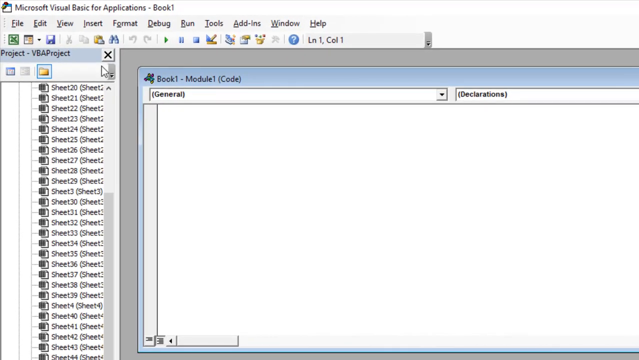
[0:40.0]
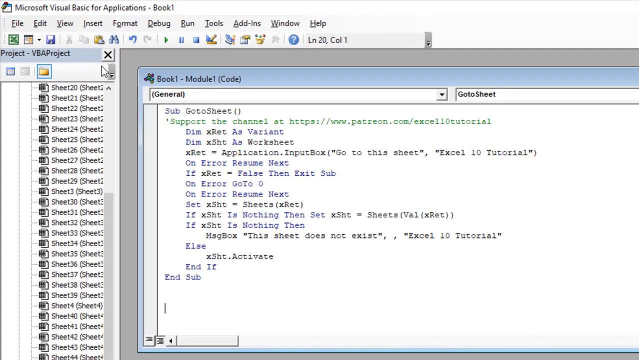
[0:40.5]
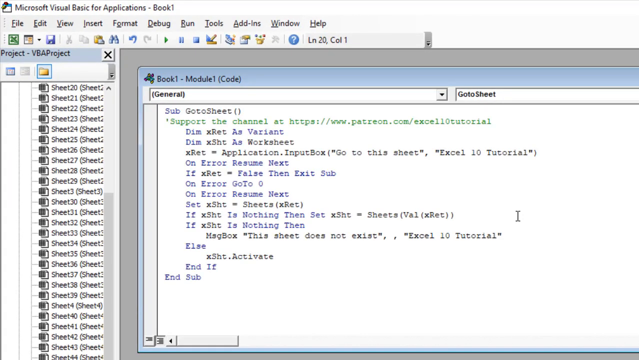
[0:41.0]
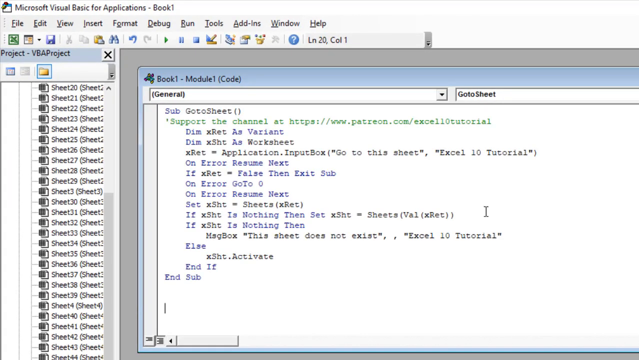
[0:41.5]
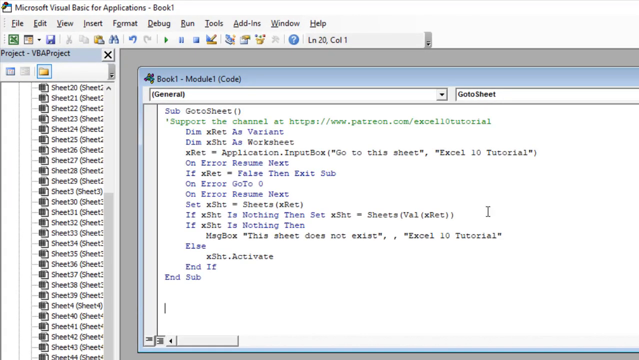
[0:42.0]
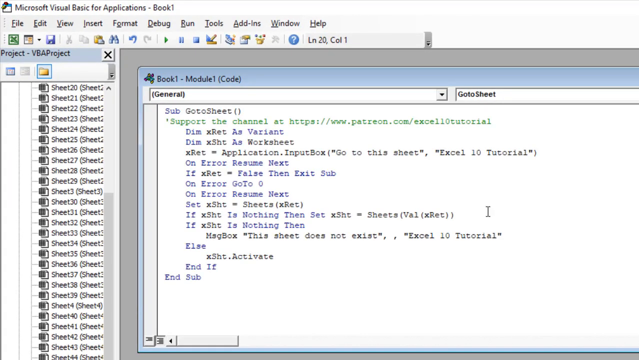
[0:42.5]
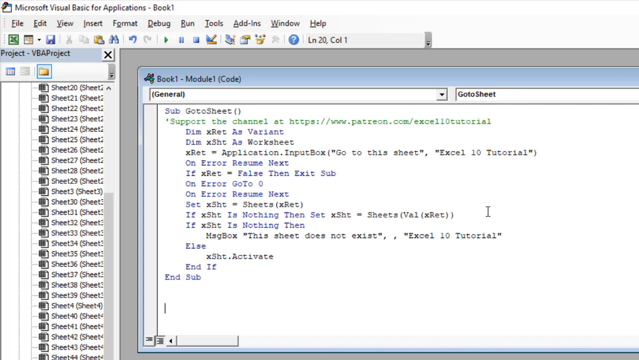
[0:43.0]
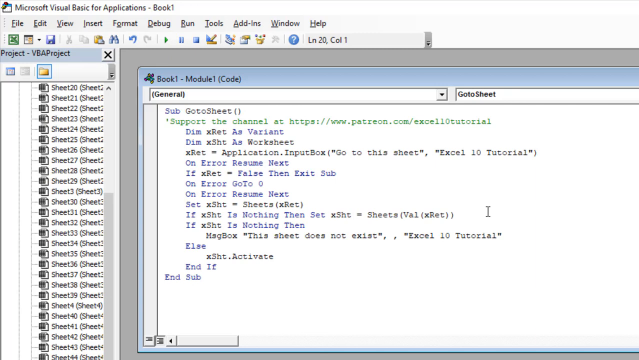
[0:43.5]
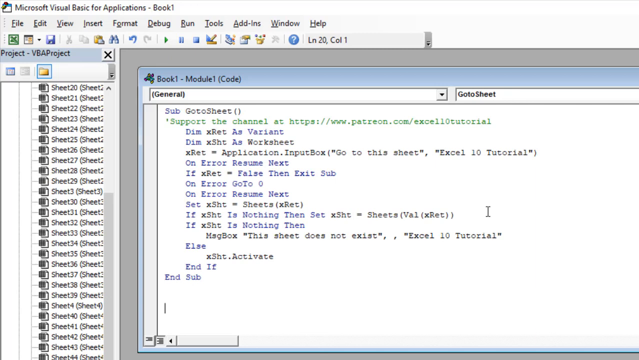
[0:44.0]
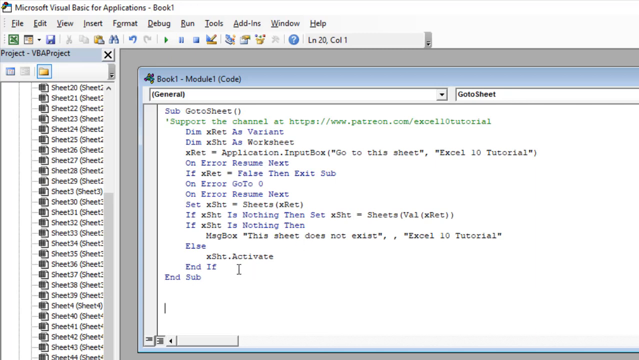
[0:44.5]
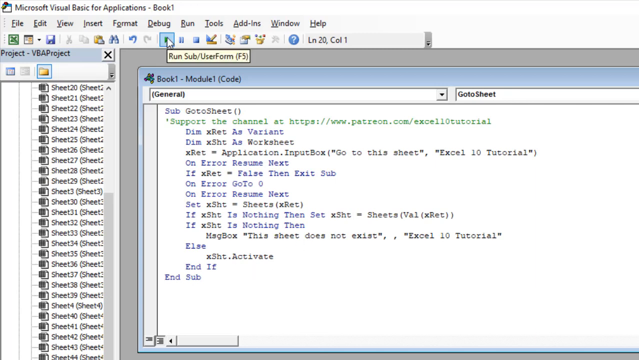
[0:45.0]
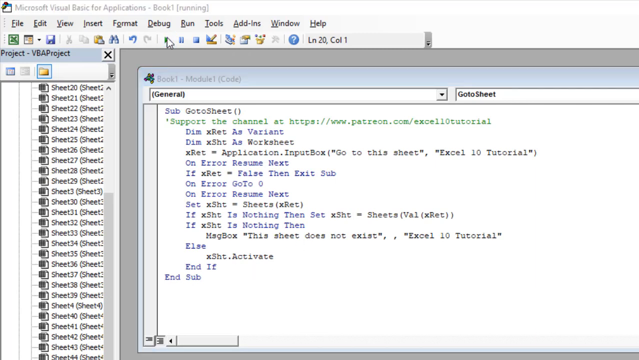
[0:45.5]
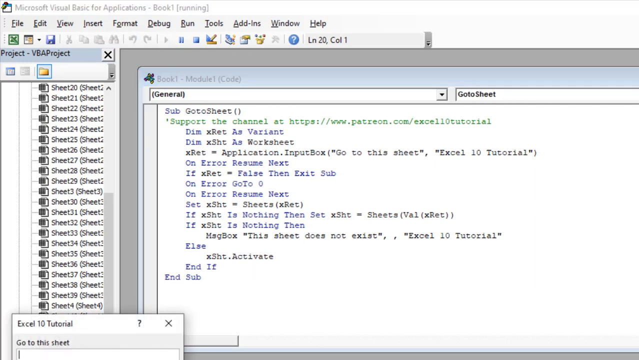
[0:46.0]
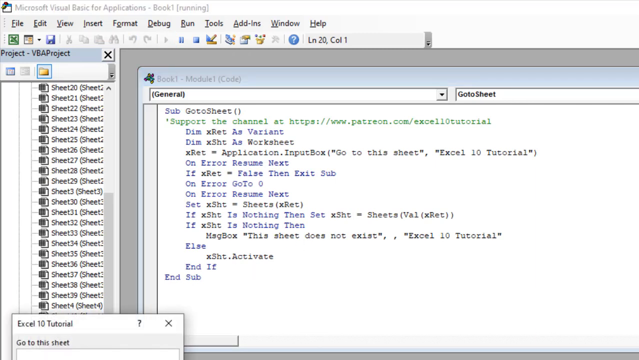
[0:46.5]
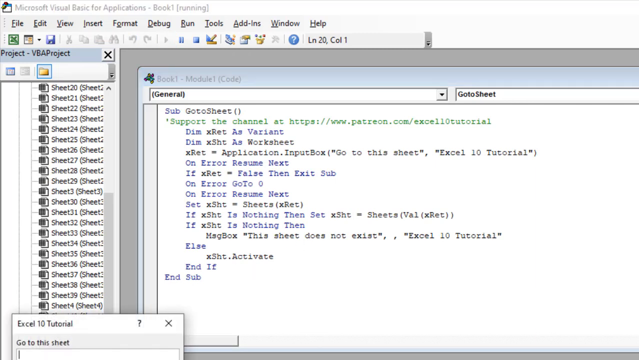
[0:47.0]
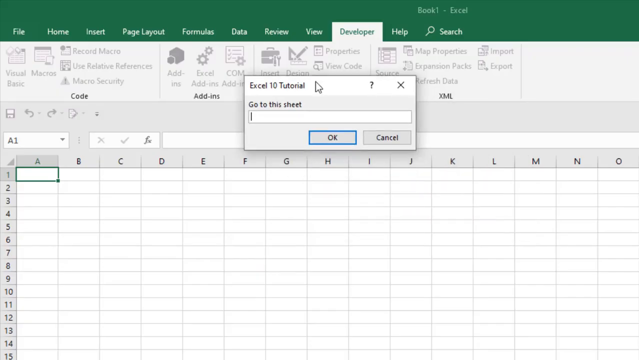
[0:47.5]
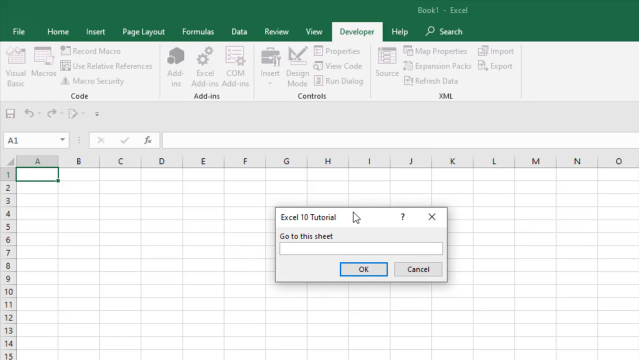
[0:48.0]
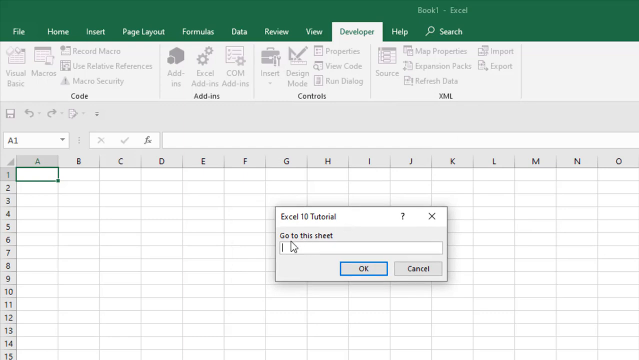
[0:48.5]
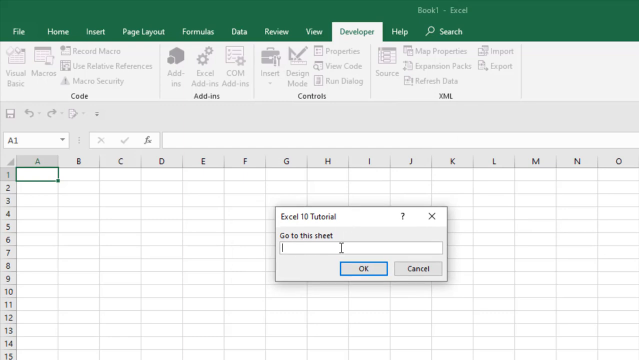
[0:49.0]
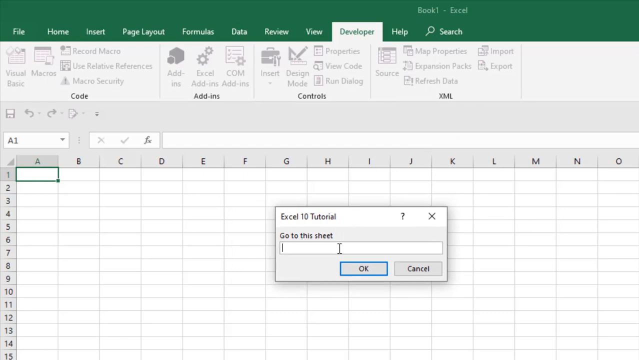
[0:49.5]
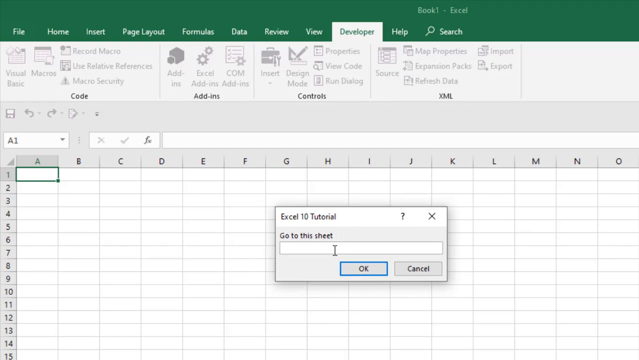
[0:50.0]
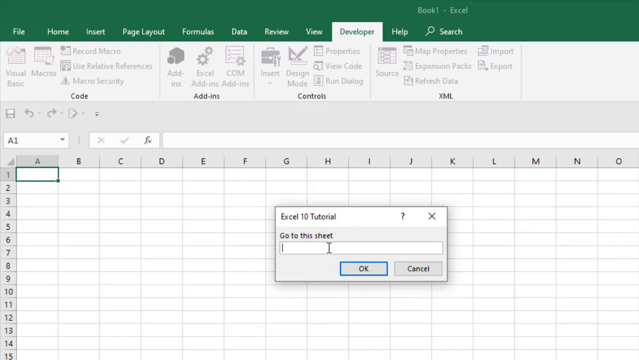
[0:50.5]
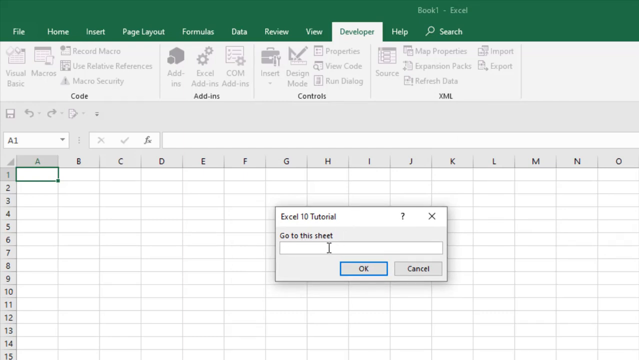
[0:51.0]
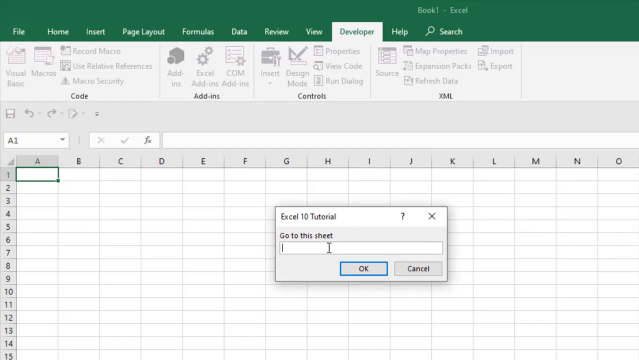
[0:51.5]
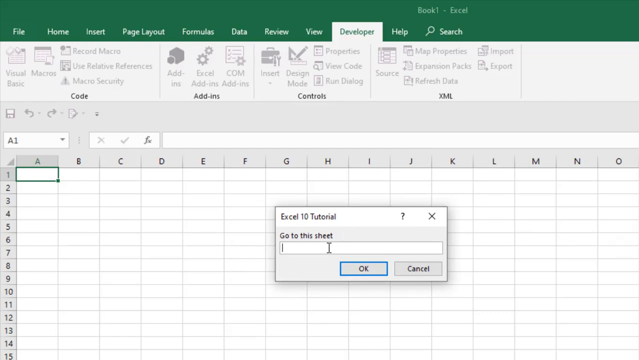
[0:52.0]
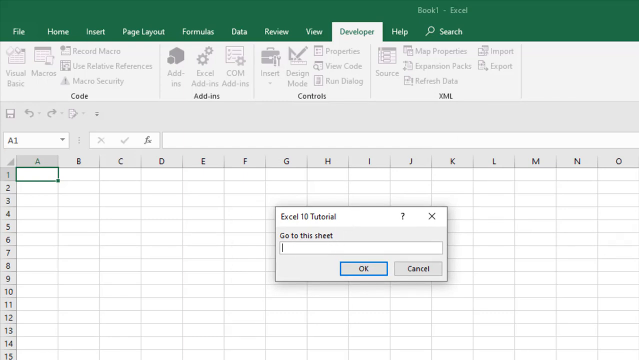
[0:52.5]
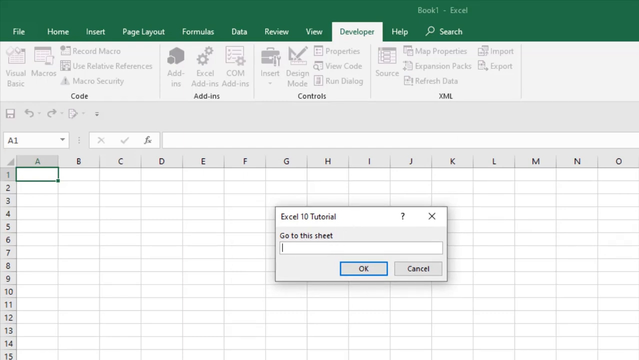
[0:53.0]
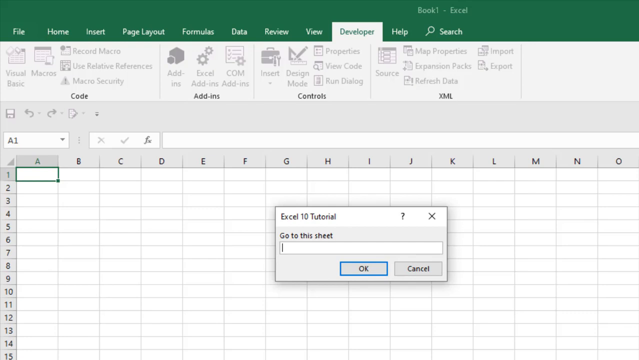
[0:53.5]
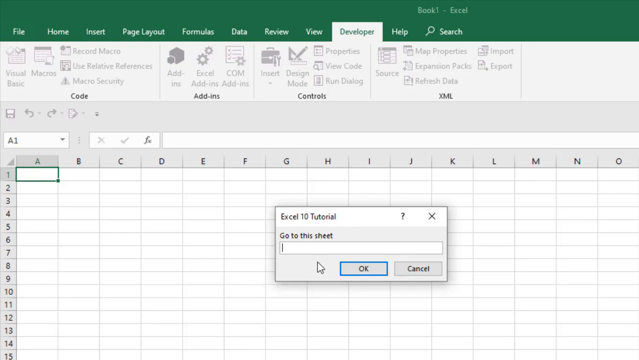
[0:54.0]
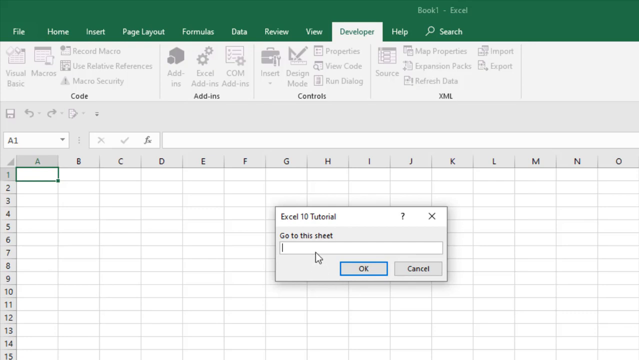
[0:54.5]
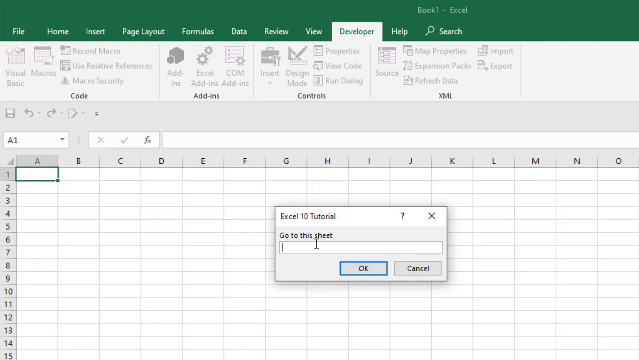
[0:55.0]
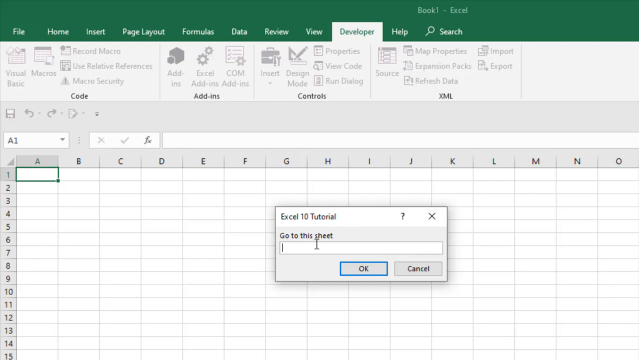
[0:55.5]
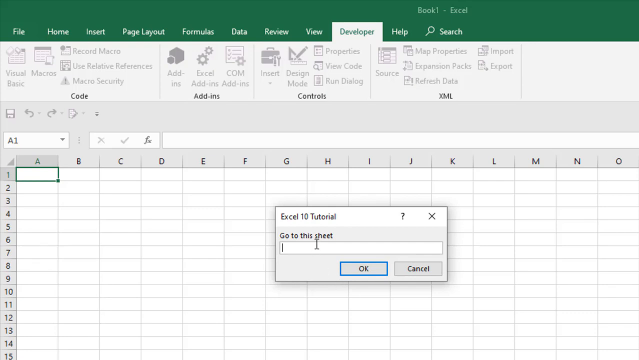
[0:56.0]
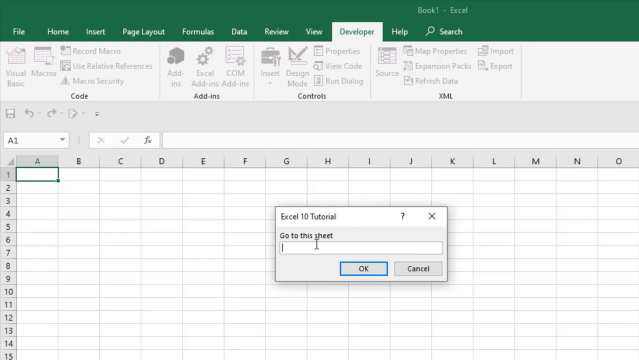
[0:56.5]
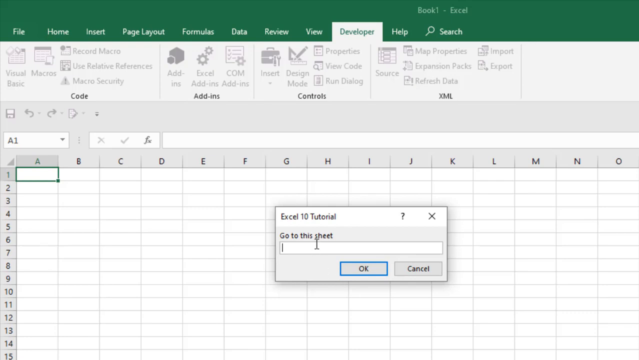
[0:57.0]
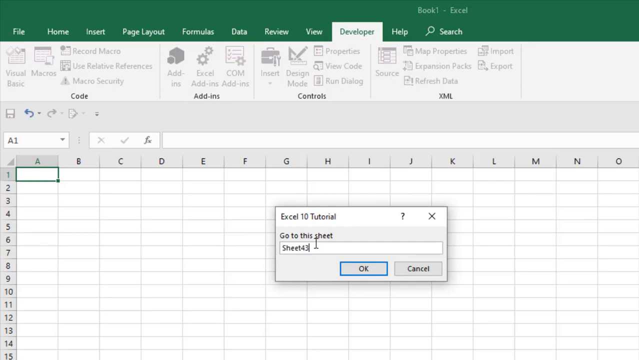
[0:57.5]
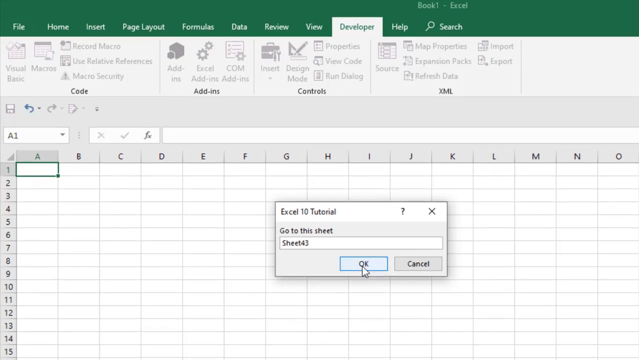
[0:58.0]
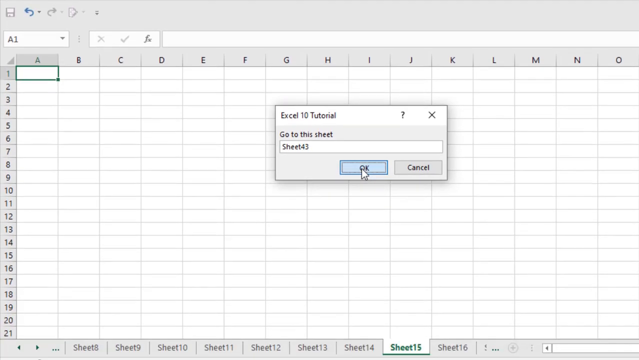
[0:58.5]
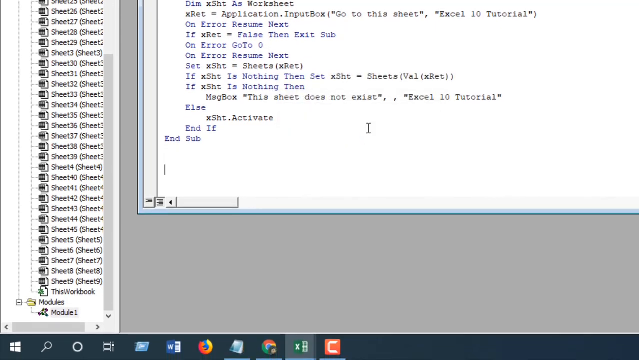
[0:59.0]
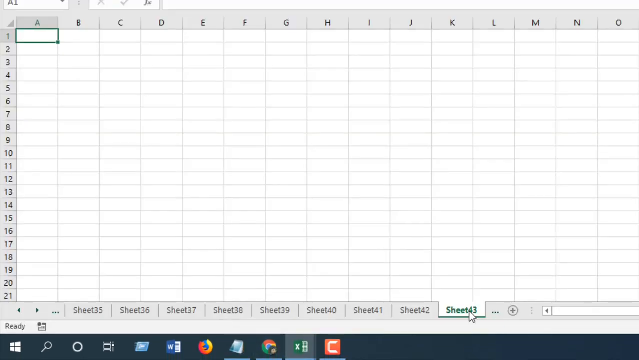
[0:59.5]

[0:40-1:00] The Microsoft Visual Basic application for Excel is open. The user goes to Book 1 and what looks like a VBA project, opening a Module 1 in Book 1 to view the code displayed for it. Soon after, they go to the developer screen to an Excel 10 tutorial to begin entering information into Book 1, referring to page three. The code displayed in that module is being edited and changed on screen.